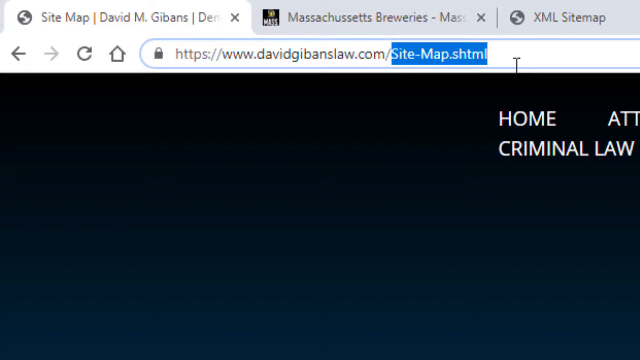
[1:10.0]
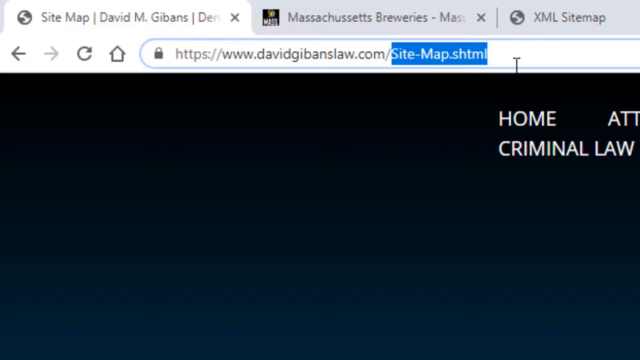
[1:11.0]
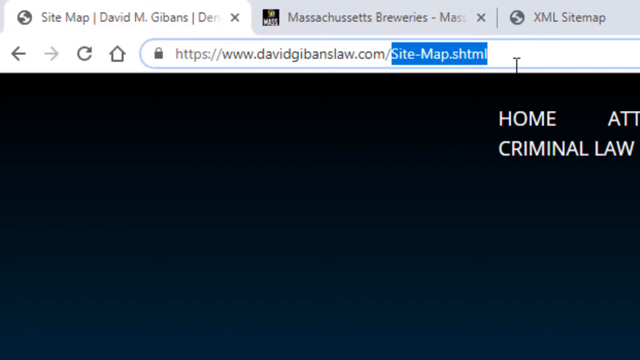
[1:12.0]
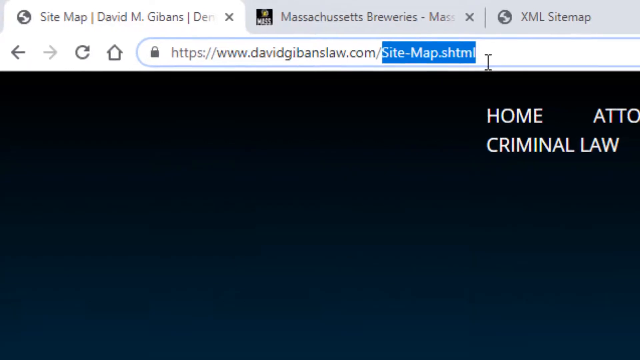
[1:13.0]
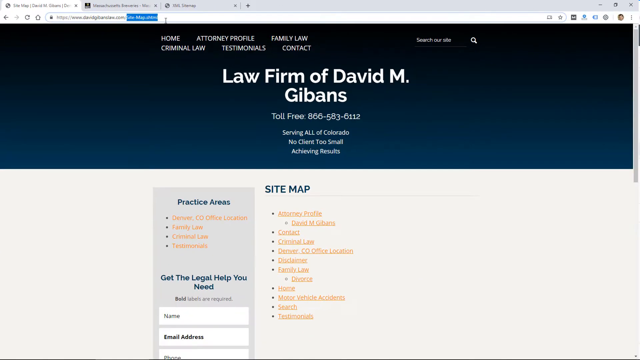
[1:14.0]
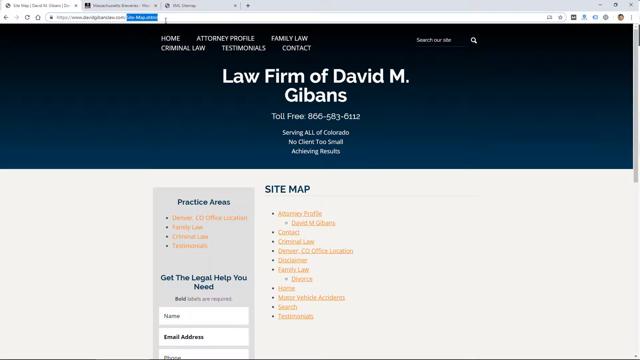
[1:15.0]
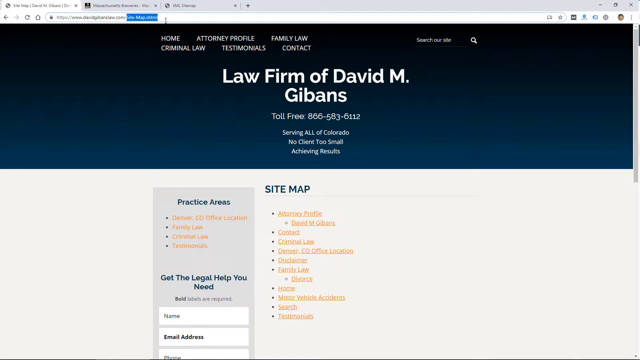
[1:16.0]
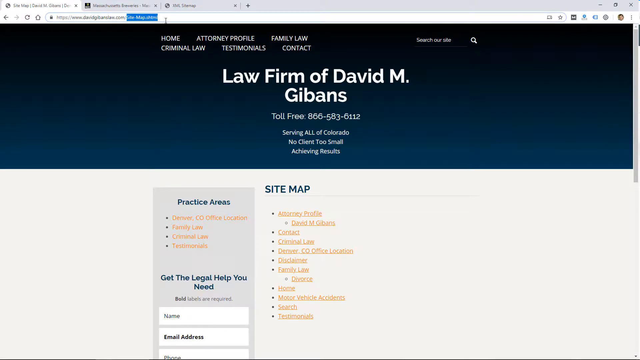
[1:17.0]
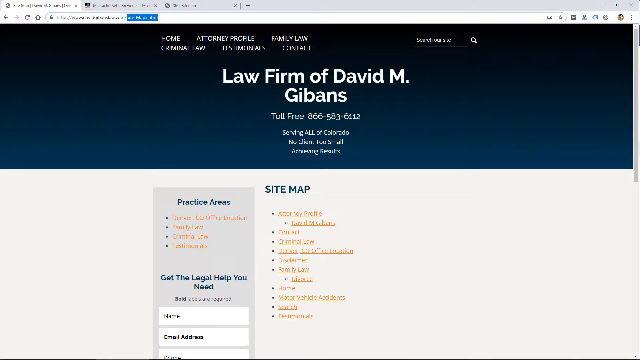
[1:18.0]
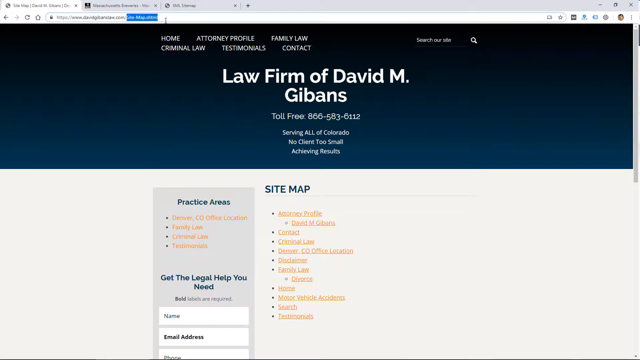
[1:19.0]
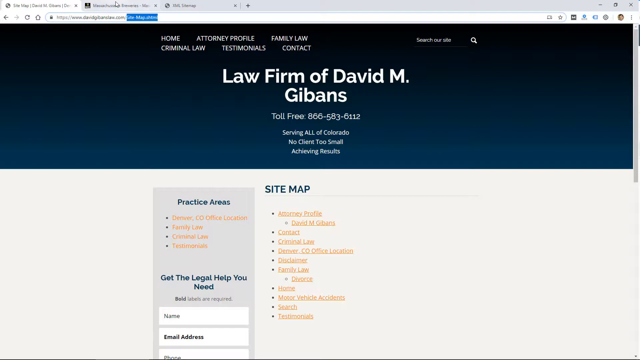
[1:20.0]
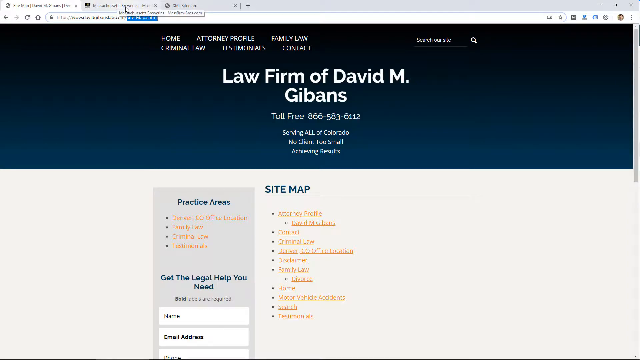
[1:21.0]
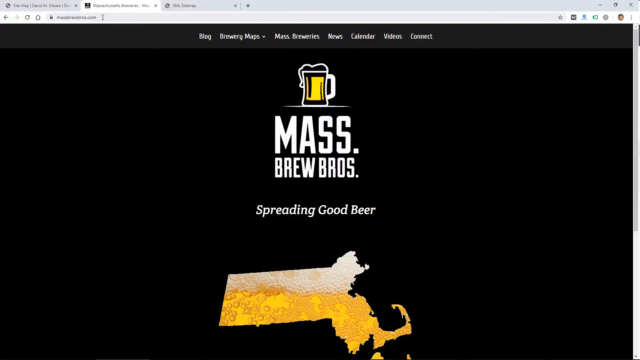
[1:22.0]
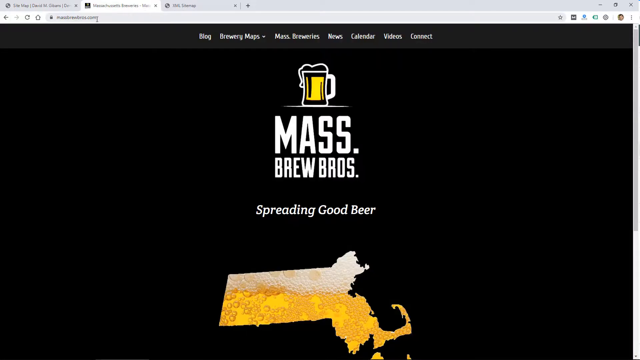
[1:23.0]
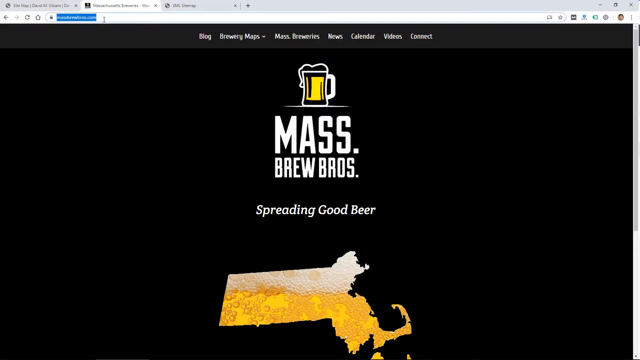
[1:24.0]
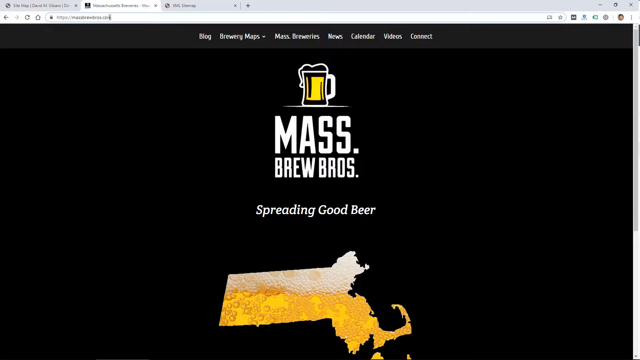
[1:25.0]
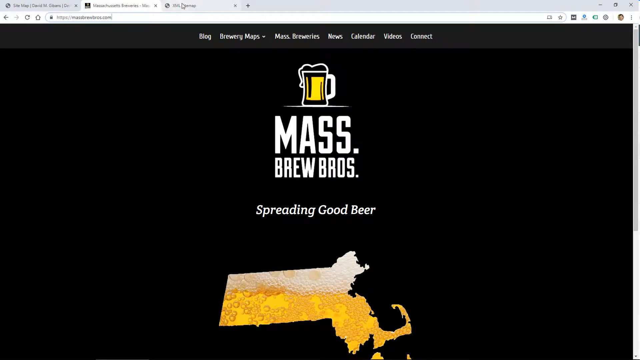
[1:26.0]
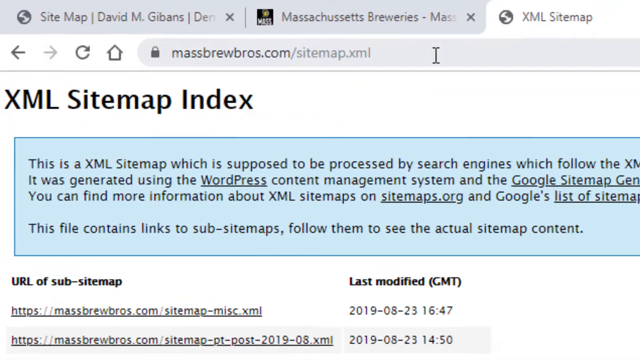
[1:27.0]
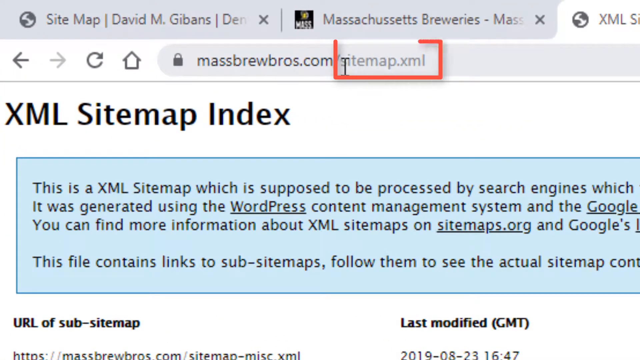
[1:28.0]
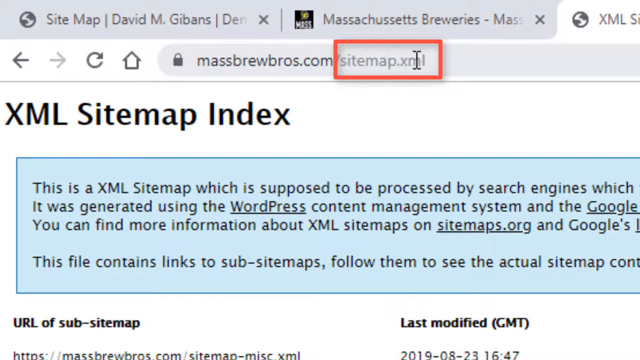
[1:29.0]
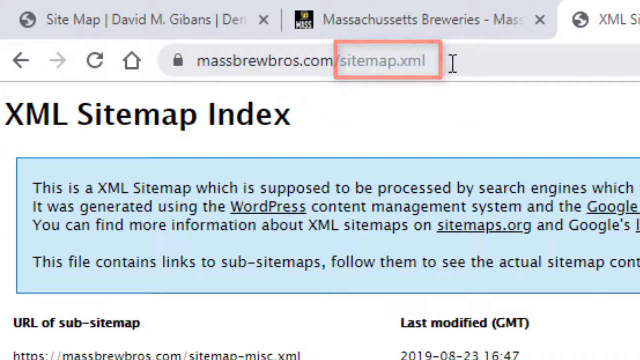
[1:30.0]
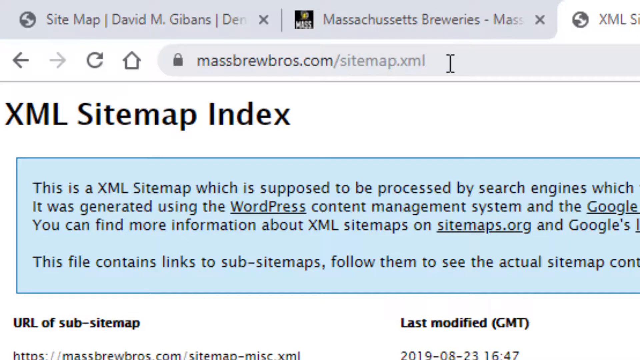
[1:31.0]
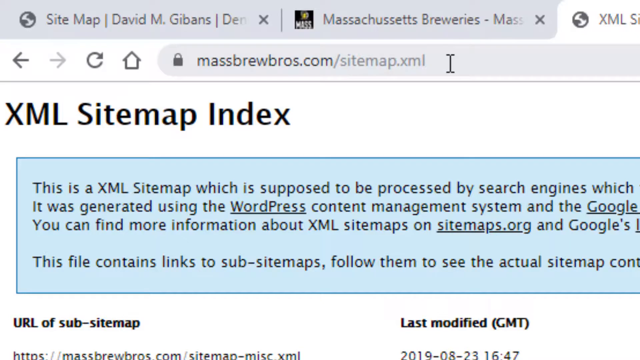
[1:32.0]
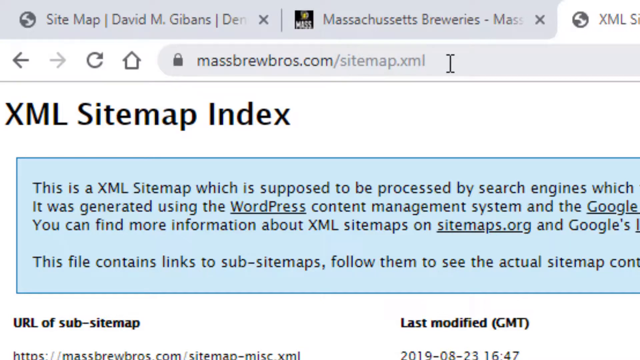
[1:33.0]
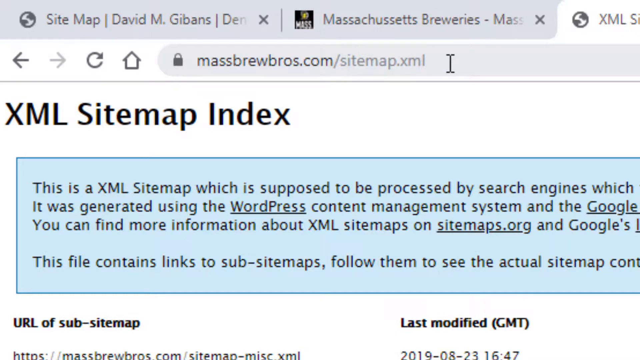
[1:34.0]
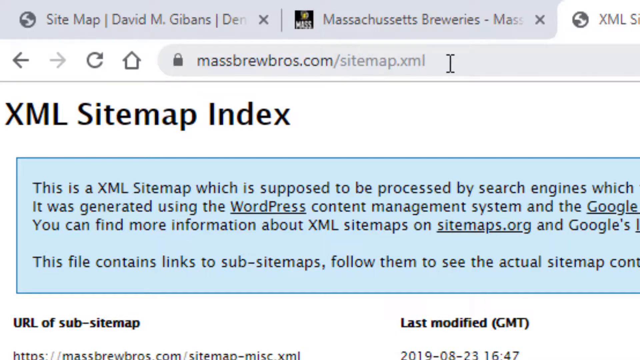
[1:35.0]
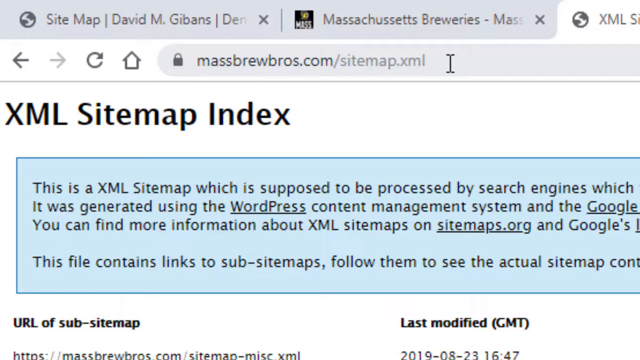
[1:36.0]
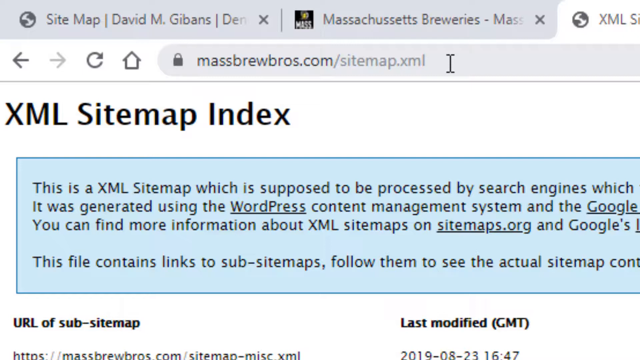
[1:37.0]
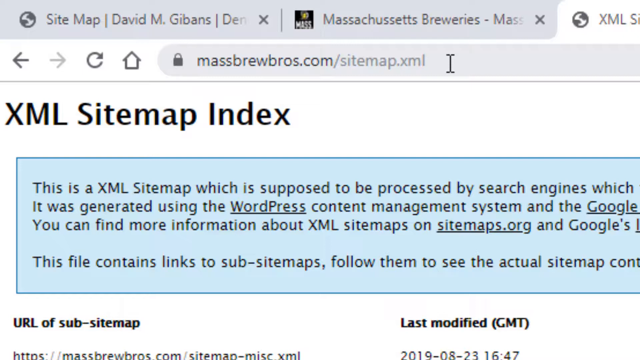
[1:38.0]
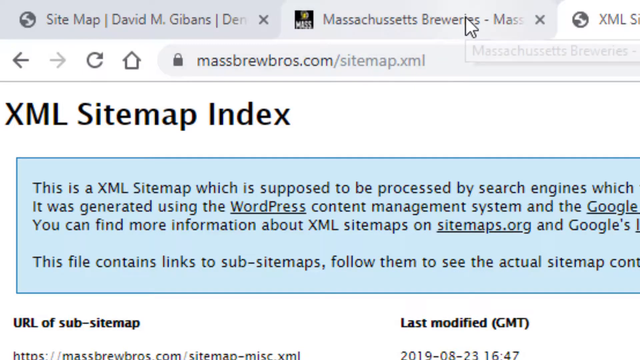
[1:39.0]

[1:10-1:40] A website is shown with "Sitemap, David M. Gibbons" at the top. One search bar reads "Massachusetts Breweries," and the search bar below it reads "https://www.davidgibbonslaw.com site-map.html." Back, forward, refresh and download buttons are at the top left. The screen is black, and at the top right of the black part are "Home" and "Criminal Law." The view zooms out; below, on the blue part, are the words "law firm," "David" and "Gibbons" and a number. The screen then changes to a black screen with a drawing of a beer mug at the top, its handle white and on the right. Below that is "mass" and "brew bros," then "spreading good beer." Below that is an orange-yellow shape of the state of Massachusetts that looks like bubbles in a beer glass. The pointer moves up and clicks on the third tab on the right, and the view zooms in on "massbrews.com sitemap.xml."